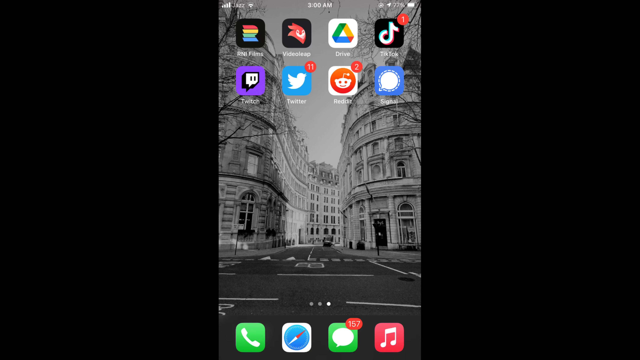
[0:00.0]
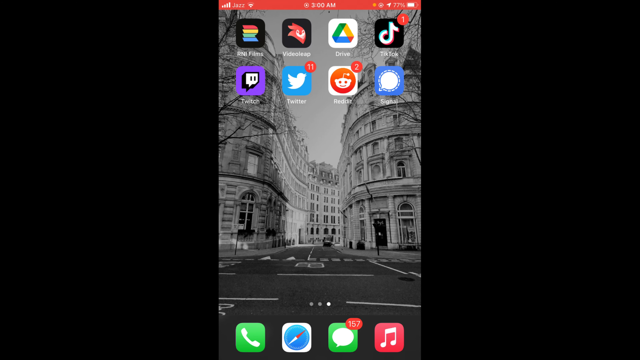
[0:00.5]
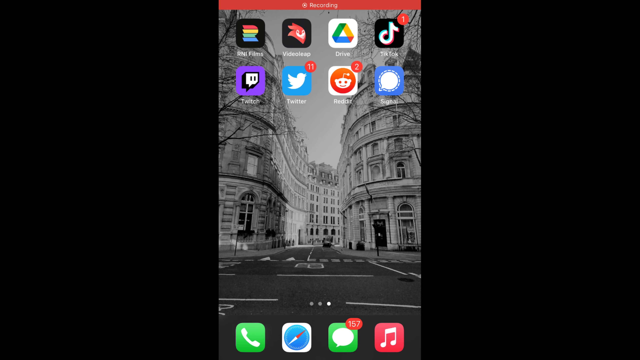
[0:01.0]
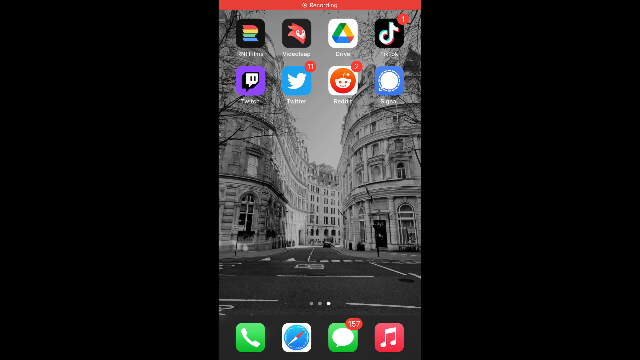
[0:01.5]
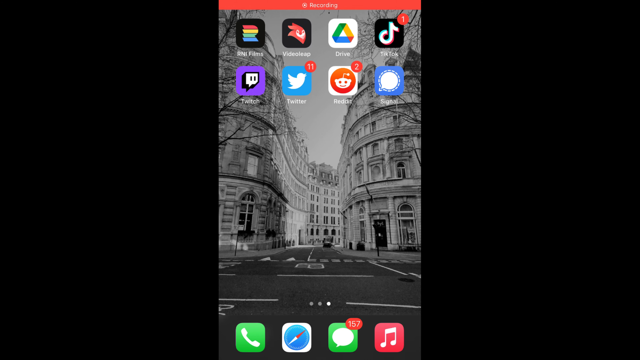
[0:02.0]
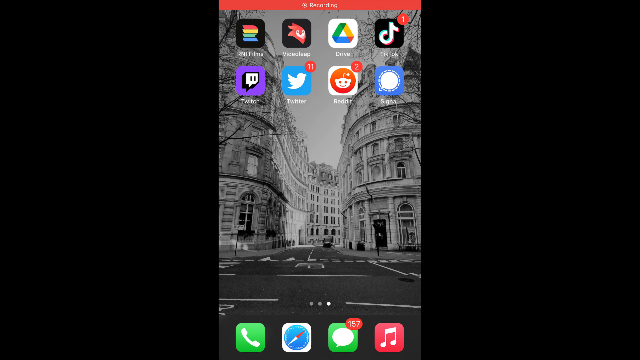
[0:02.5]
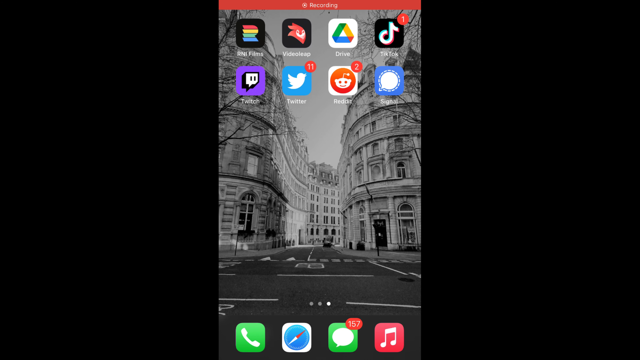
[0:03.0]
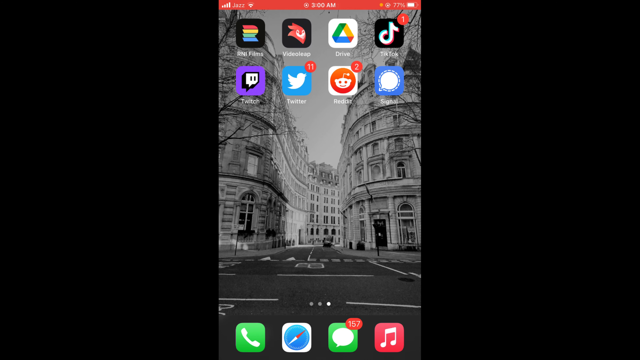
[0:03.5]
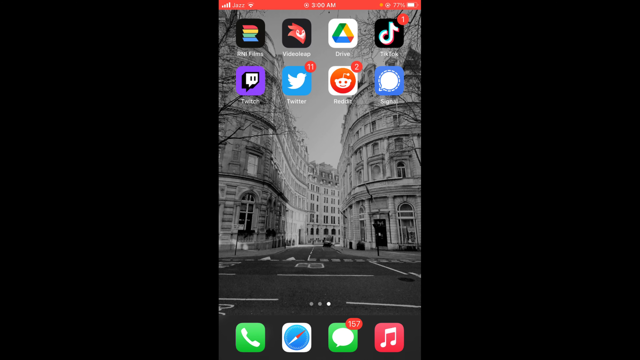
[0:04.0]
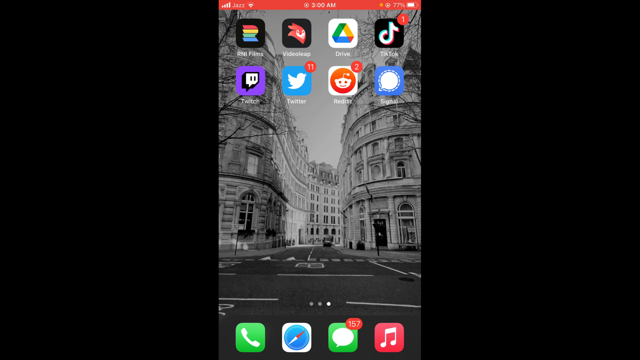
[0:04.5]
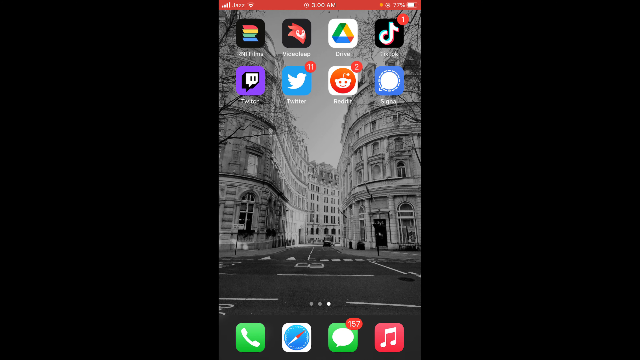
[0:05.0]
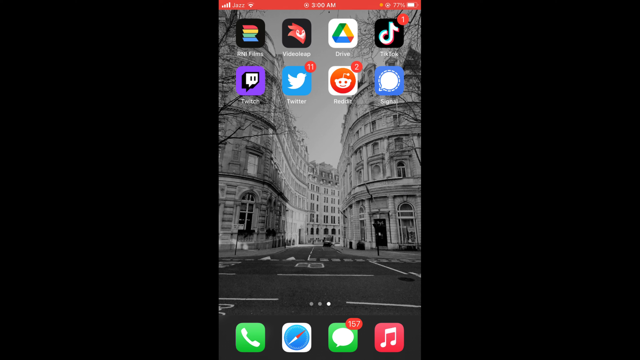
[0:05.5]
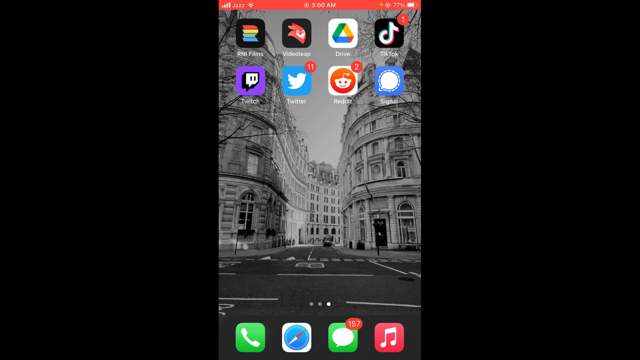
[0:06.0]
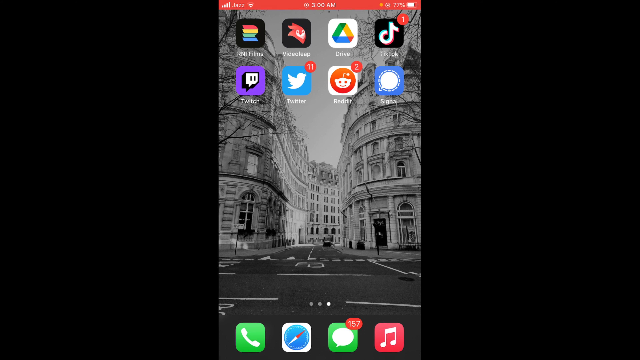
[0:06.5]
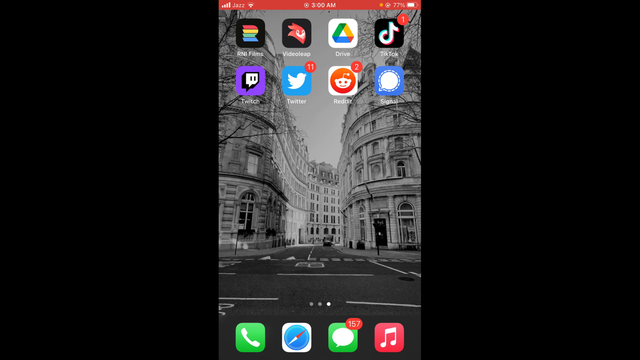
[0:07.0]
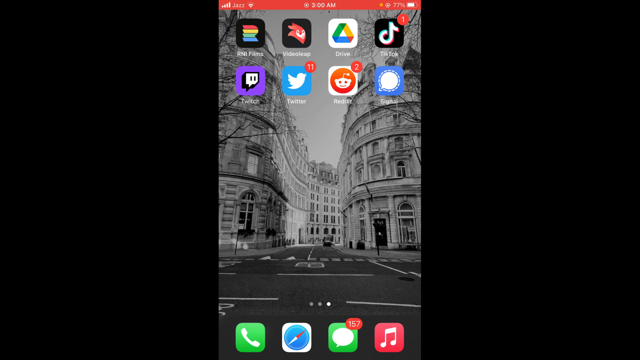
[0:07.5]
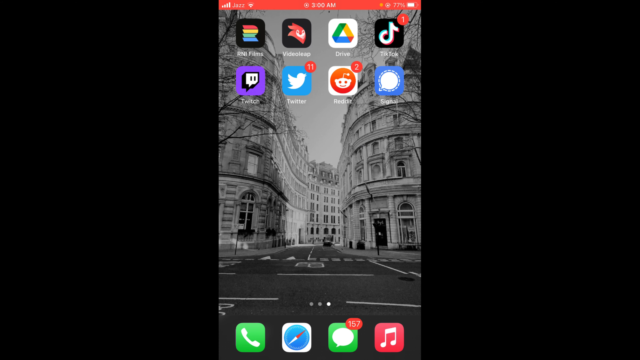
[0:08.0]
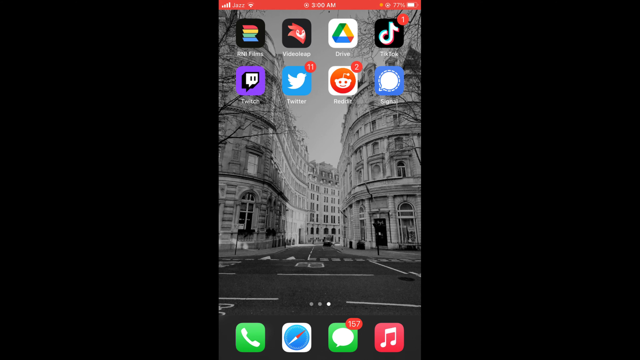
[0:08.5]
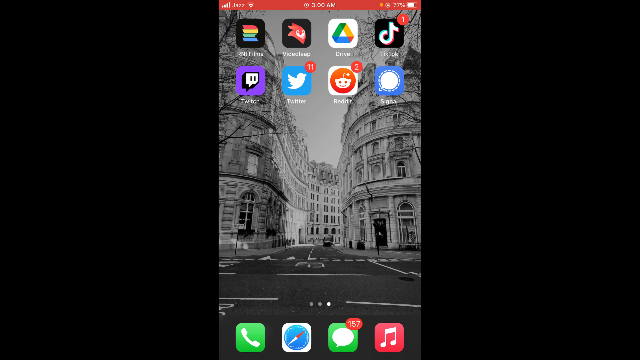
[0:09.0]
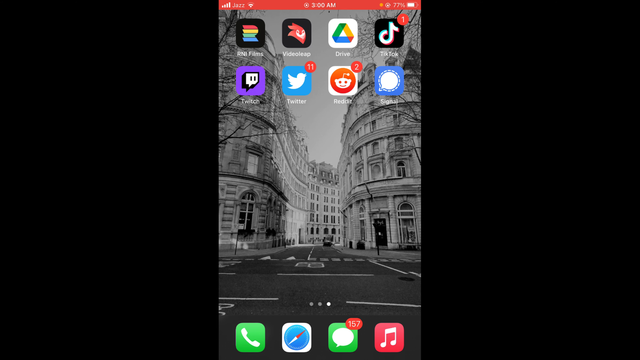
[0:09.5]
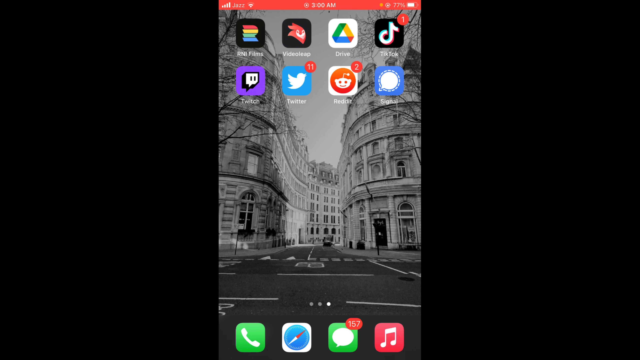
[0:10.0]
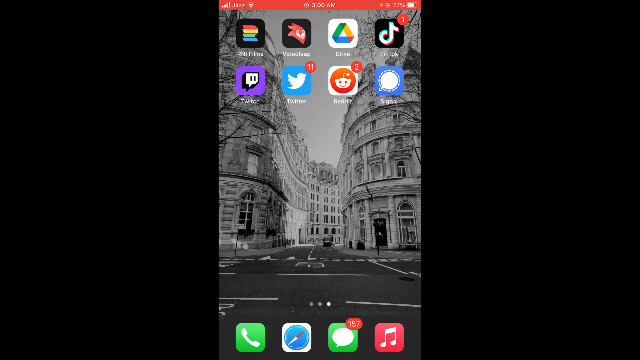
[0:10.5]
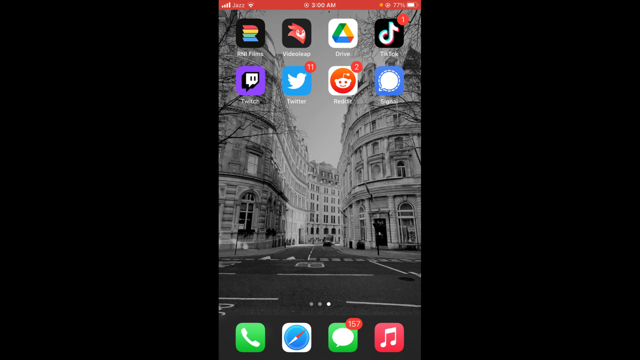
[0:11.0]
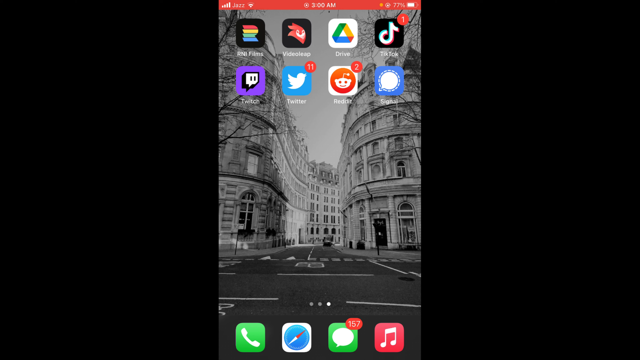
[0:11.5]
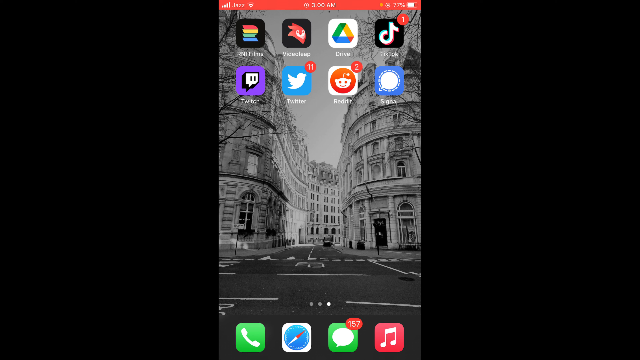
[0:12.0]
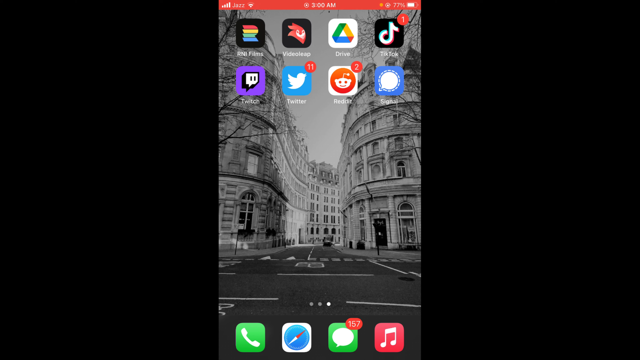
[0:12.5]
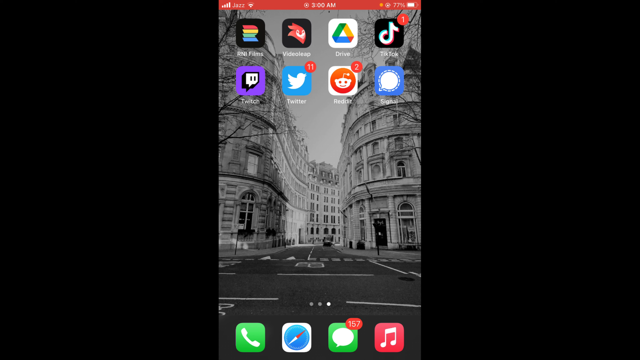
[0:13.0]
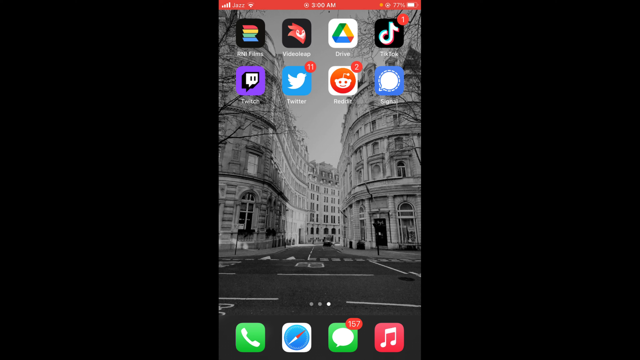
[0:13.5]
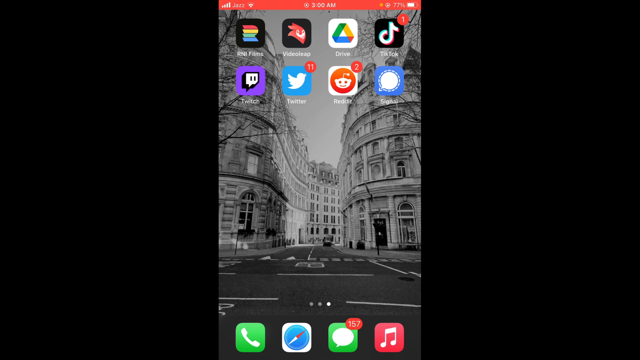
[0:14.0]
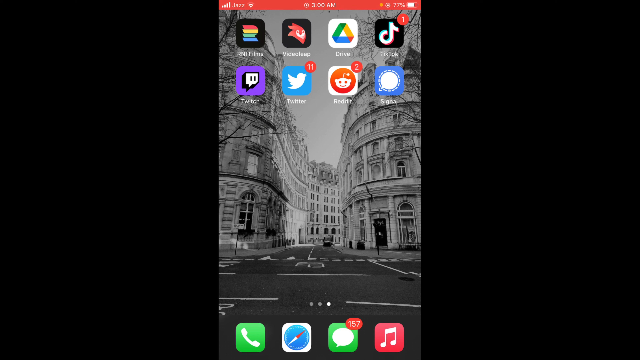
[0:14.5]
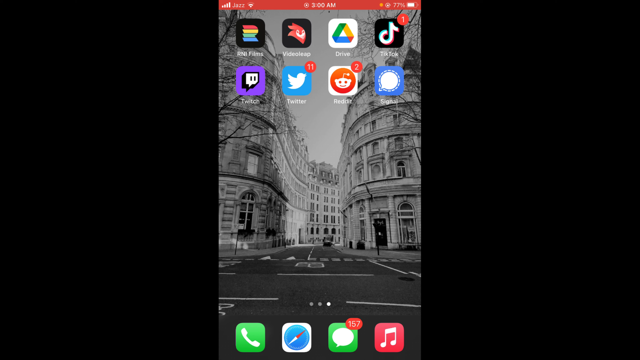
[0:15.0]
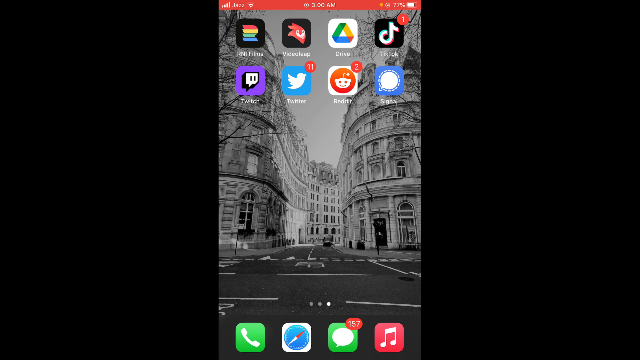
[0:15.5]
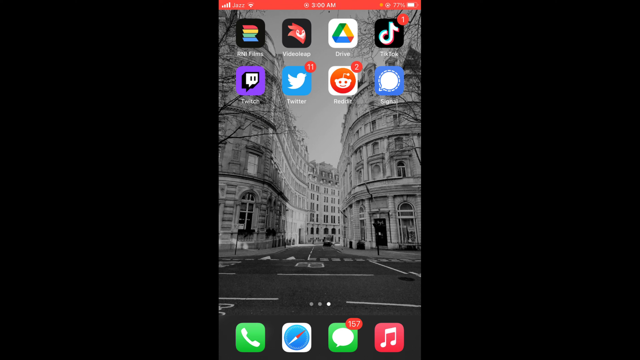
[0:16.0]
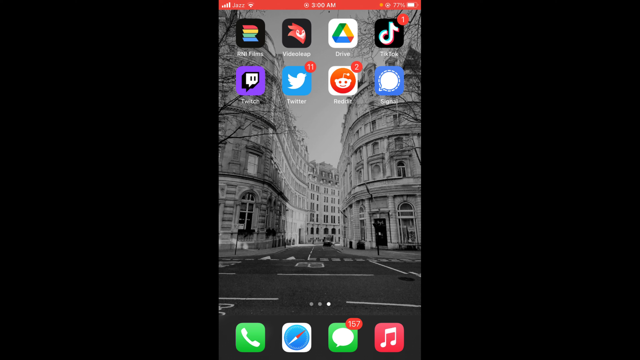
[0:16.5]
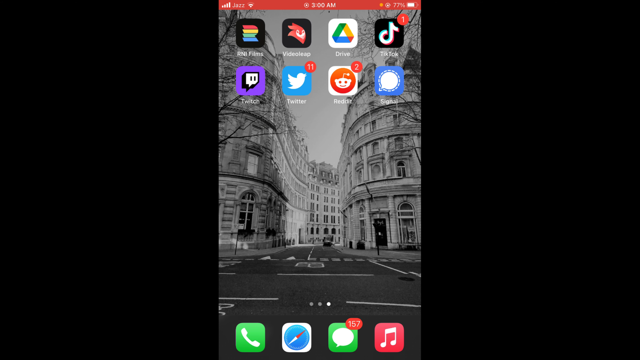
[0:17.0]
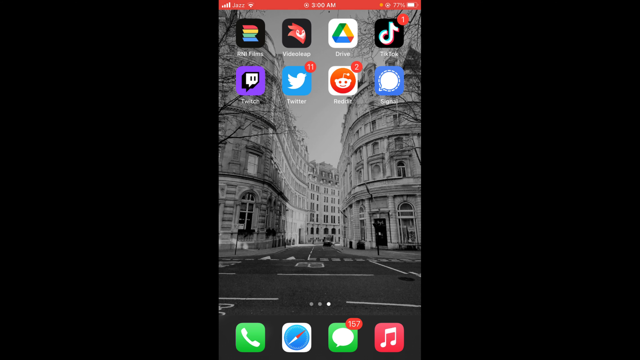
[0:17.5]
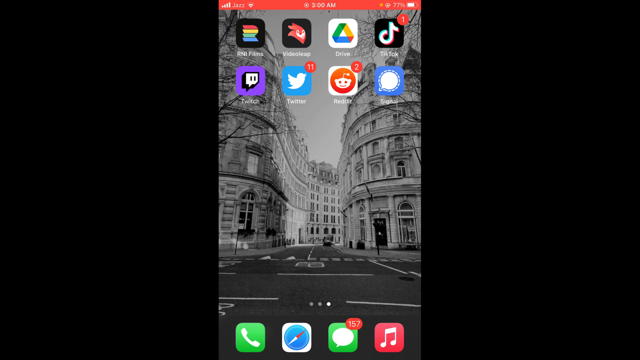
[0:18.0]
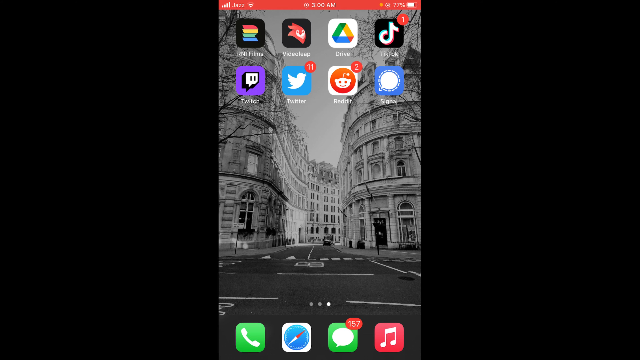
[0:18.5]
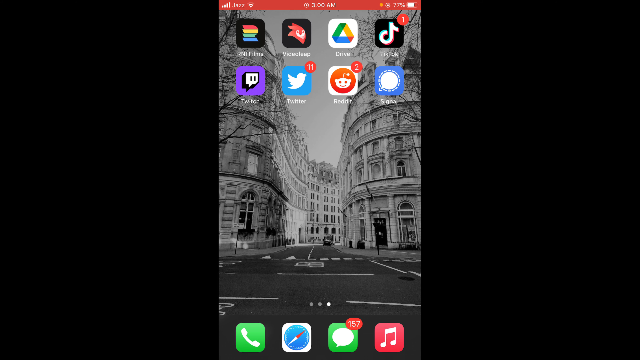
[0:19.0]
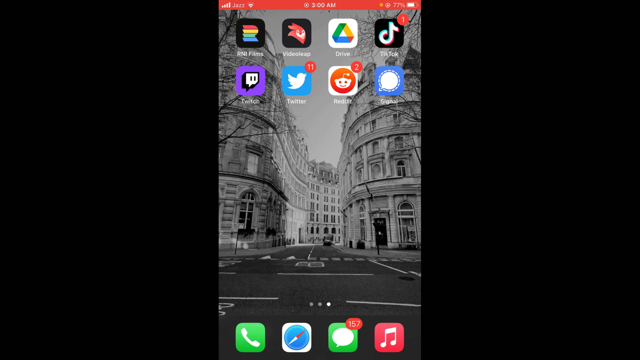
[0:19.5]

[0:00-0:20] A phone screen is displayed with a number of icons on it. The background is a black-and-white image of what looks to be an older town, possibly London or somewhere similar. A flashing red bar runs across the top, and the screen appears to say that it is recording, so the phone is apparently recording its own screen. There are notifications for Twitter and apparently Reddit. At the bottom of the screen are a phone icon, what looks like a web browser icon, a messages icon showing 157 messages, and what appears to be some sort of music icon. There is also a Google Drive icon and a TikTok icon with 1 notification, while Reddit has two notifications.